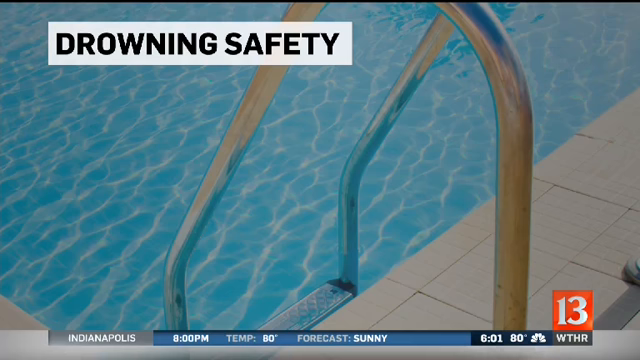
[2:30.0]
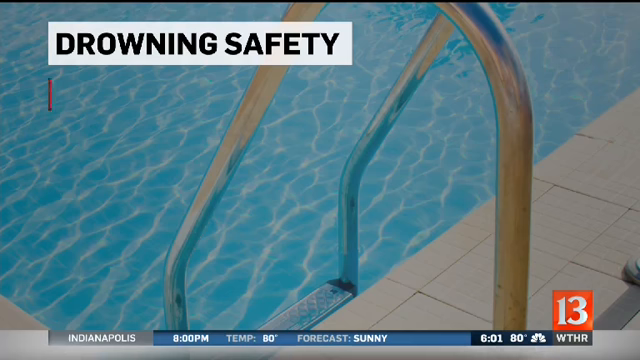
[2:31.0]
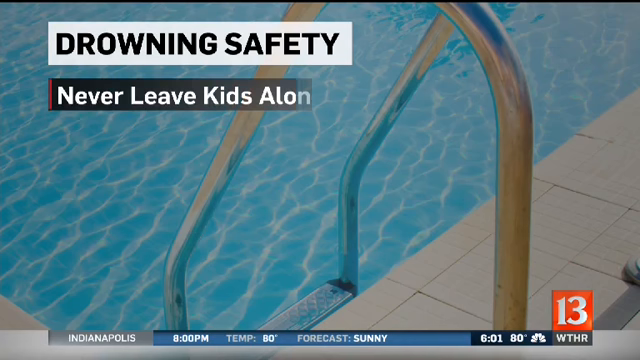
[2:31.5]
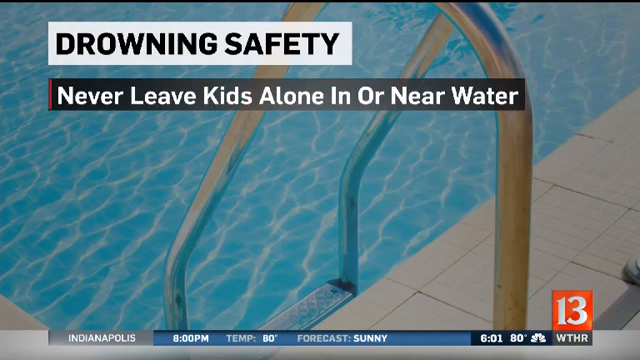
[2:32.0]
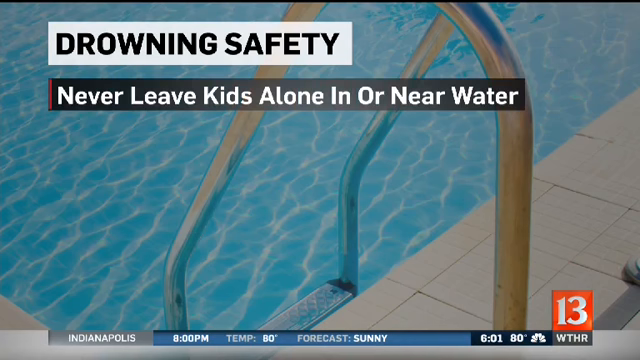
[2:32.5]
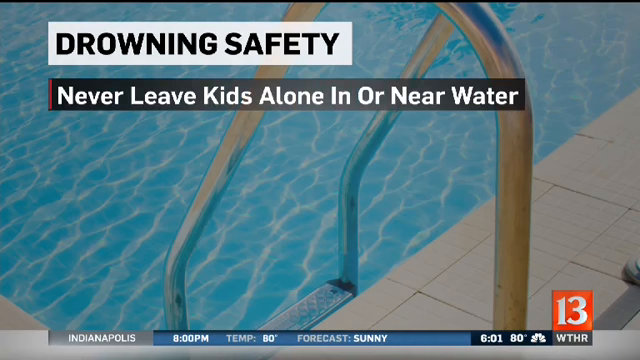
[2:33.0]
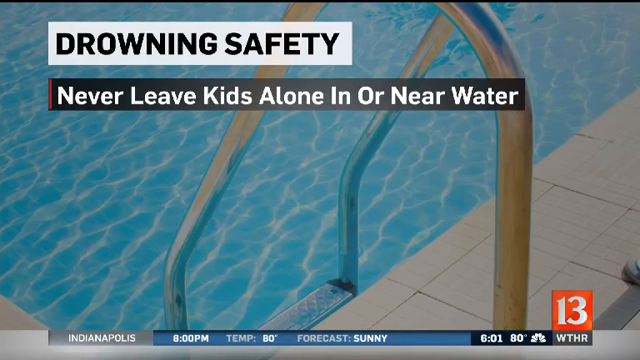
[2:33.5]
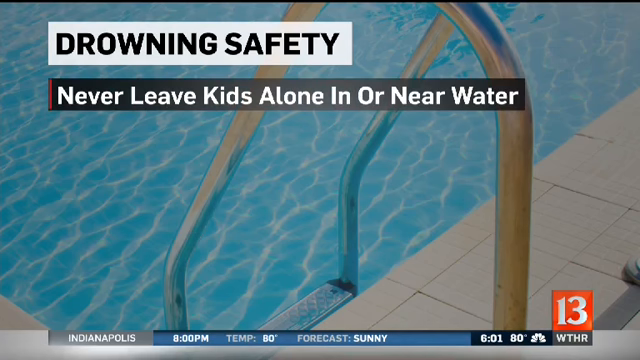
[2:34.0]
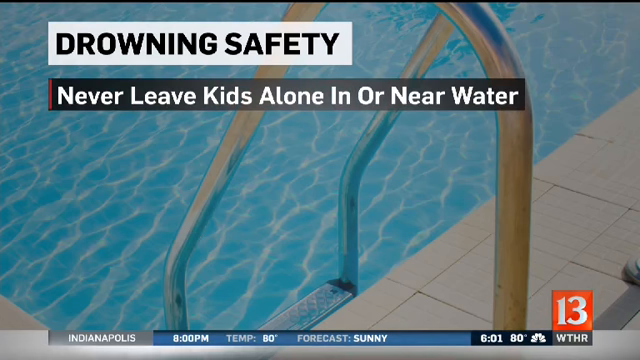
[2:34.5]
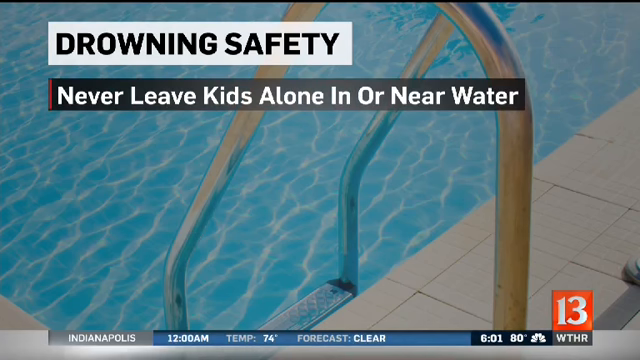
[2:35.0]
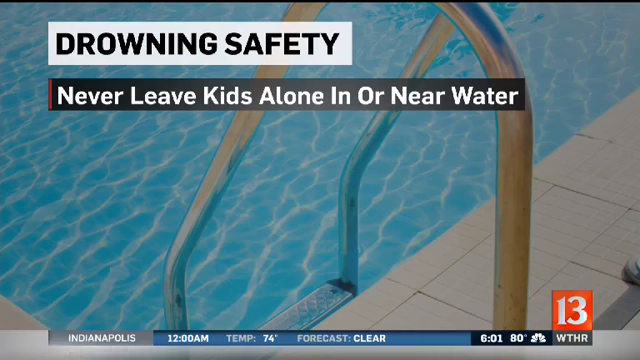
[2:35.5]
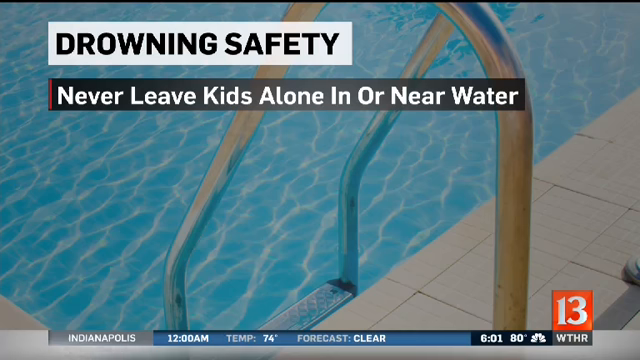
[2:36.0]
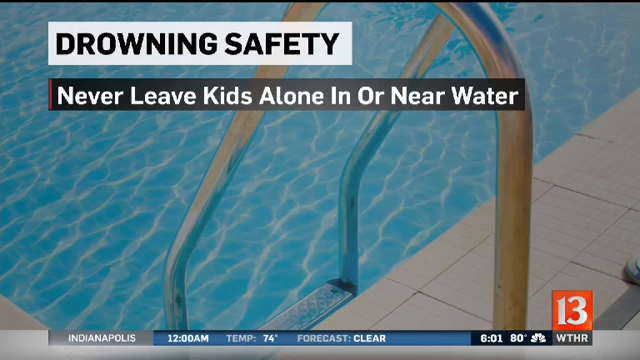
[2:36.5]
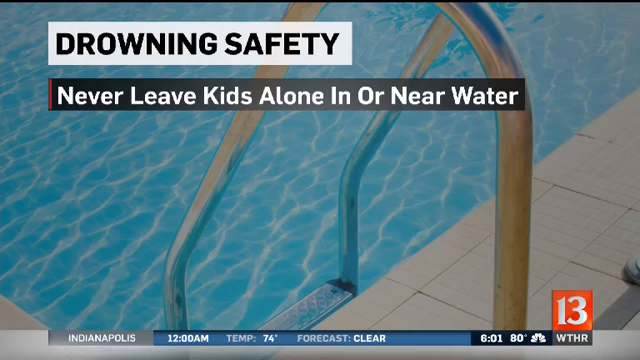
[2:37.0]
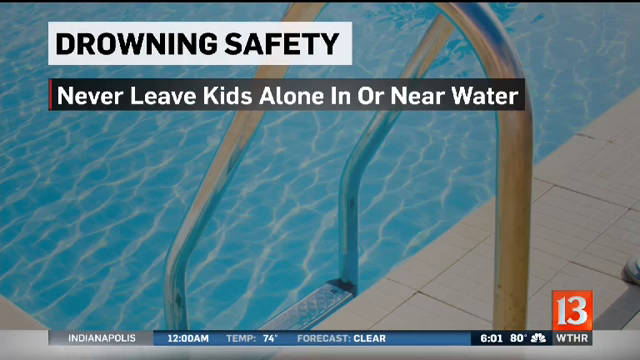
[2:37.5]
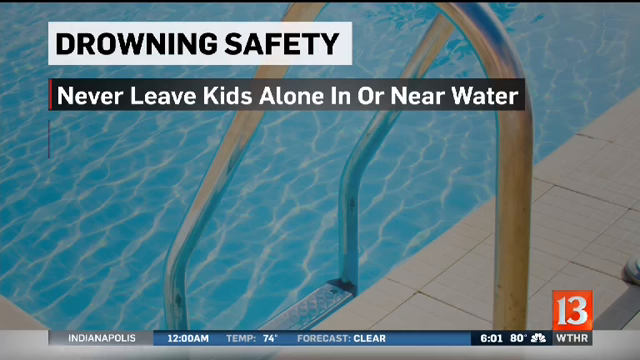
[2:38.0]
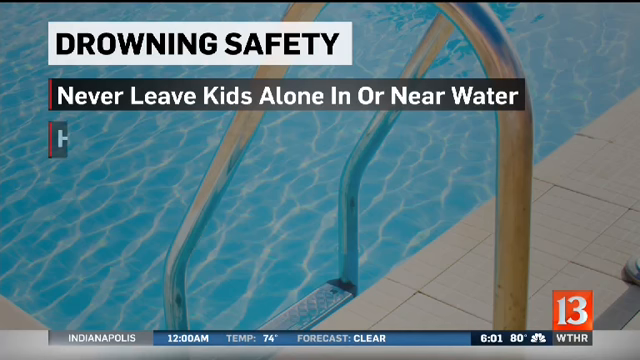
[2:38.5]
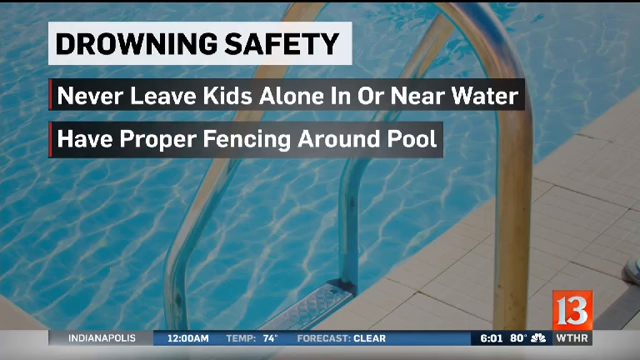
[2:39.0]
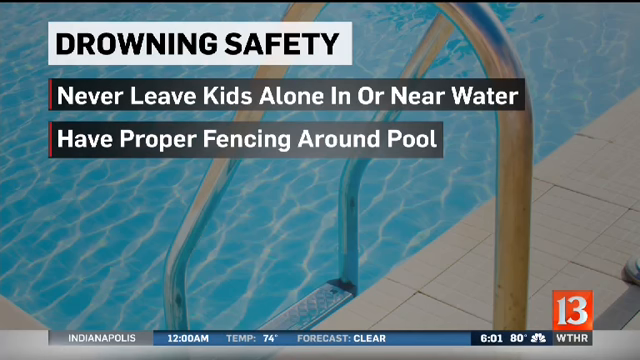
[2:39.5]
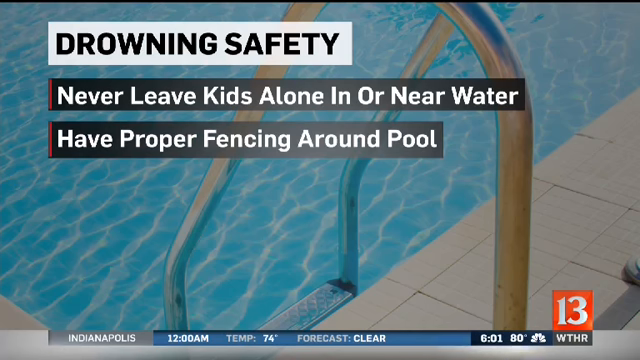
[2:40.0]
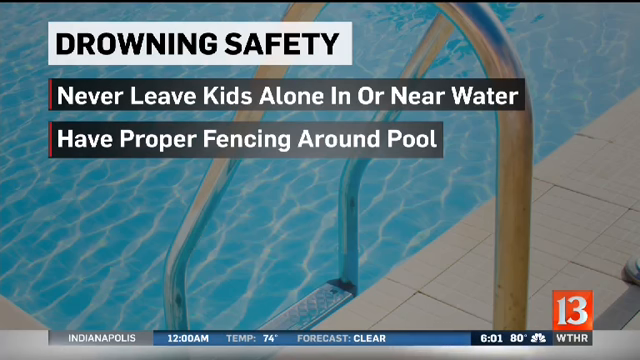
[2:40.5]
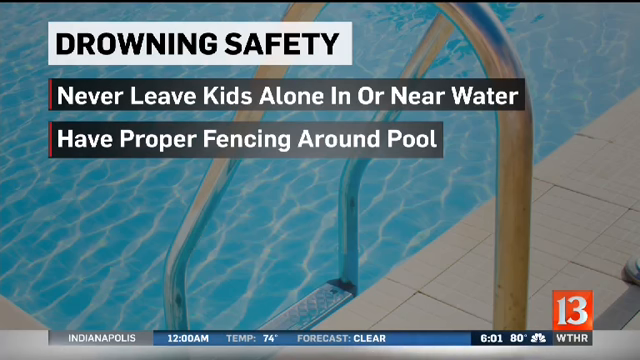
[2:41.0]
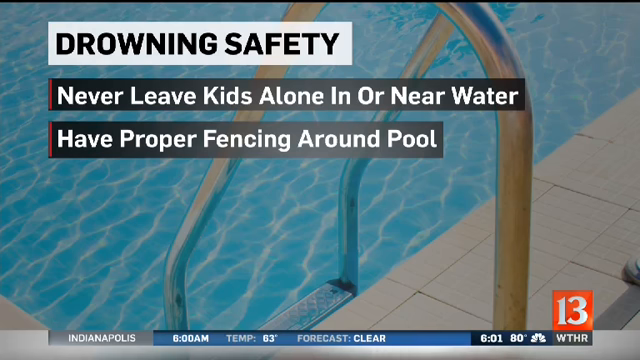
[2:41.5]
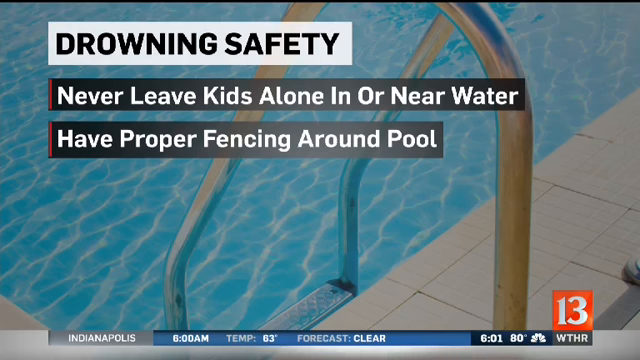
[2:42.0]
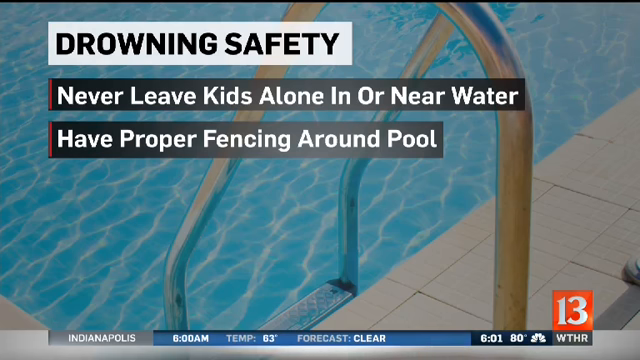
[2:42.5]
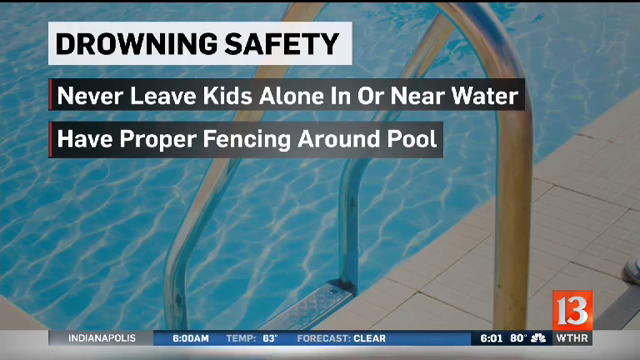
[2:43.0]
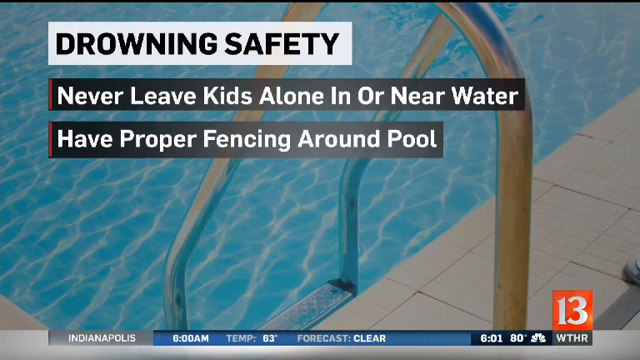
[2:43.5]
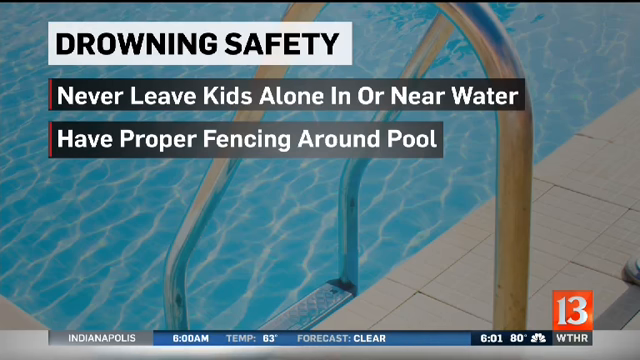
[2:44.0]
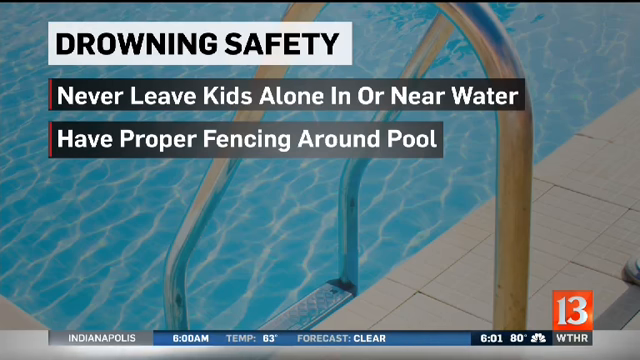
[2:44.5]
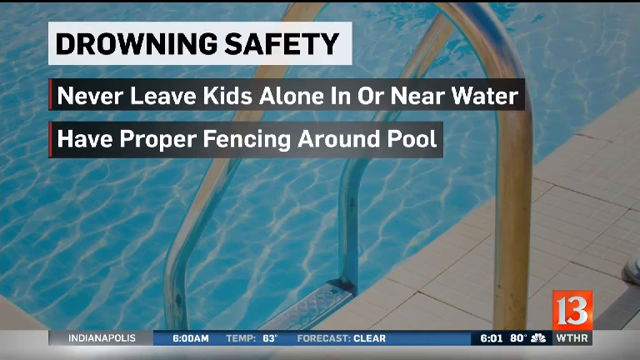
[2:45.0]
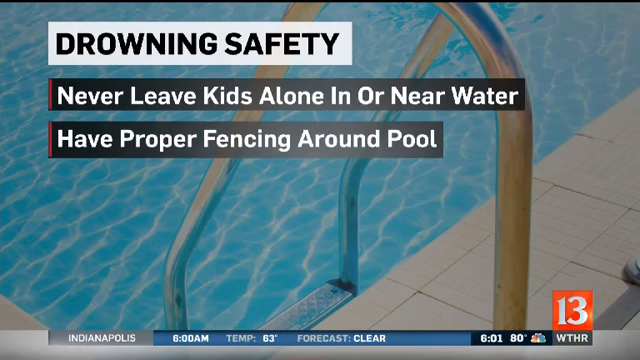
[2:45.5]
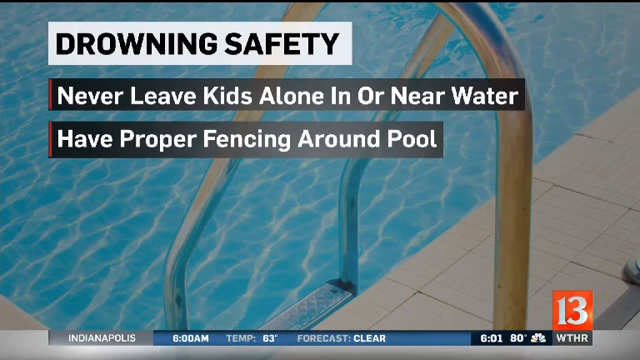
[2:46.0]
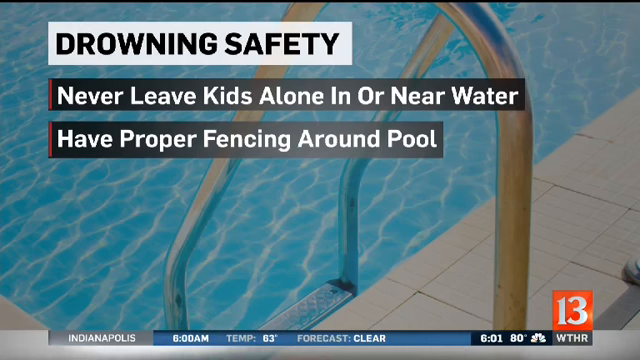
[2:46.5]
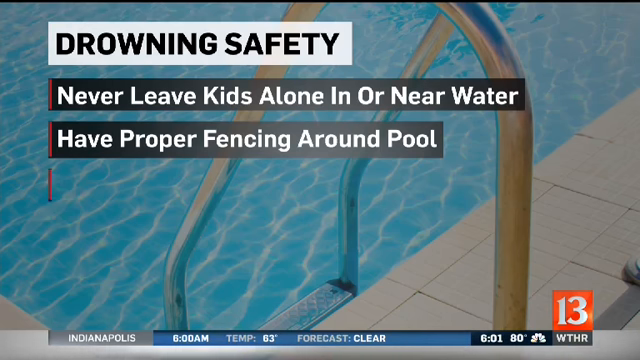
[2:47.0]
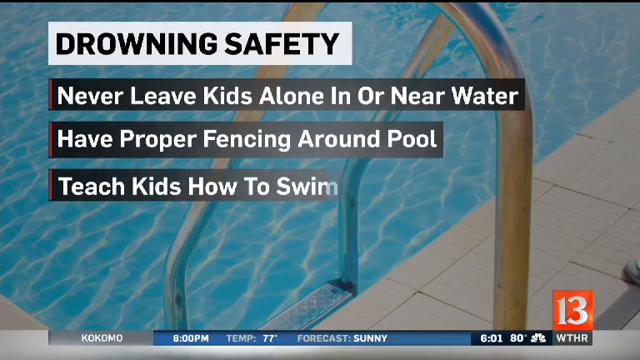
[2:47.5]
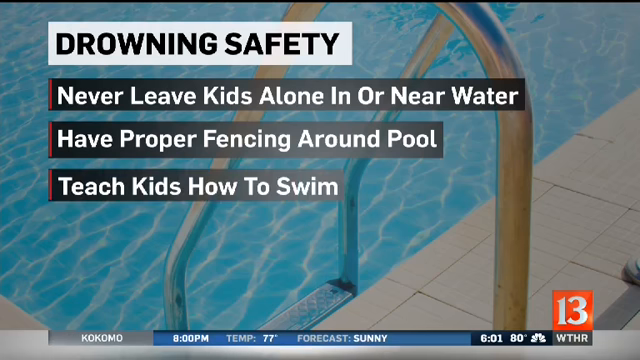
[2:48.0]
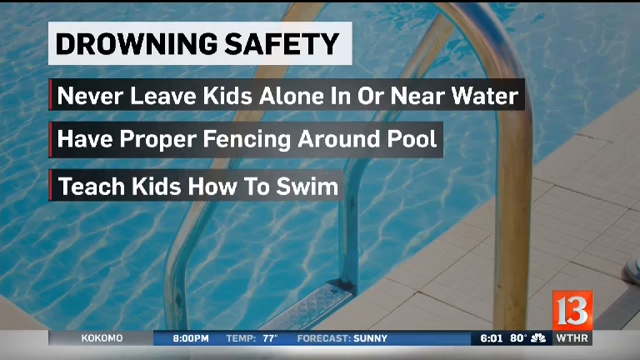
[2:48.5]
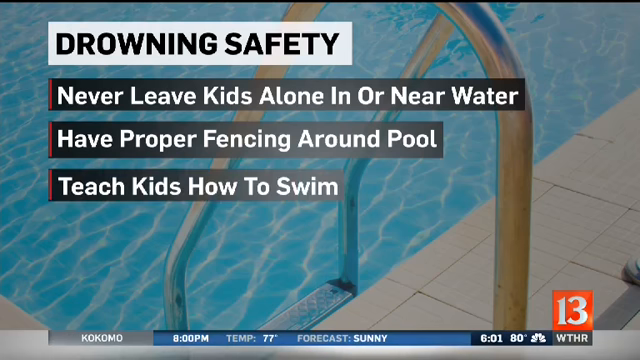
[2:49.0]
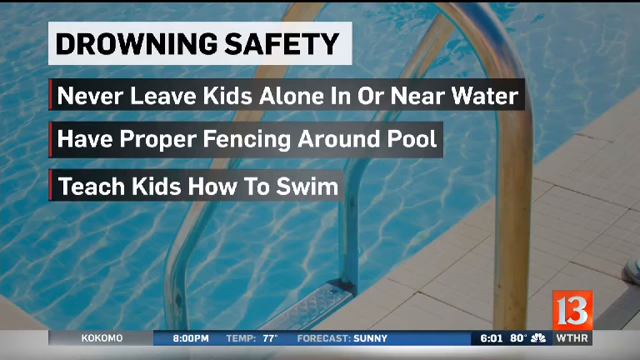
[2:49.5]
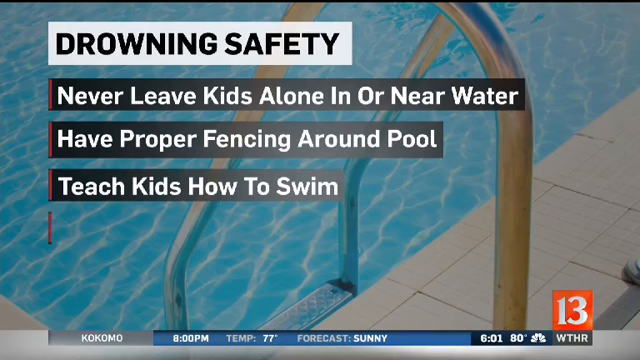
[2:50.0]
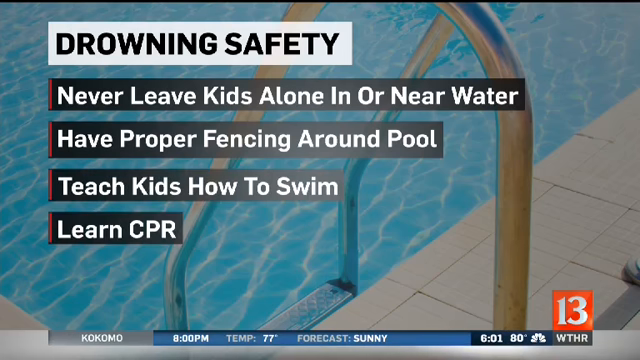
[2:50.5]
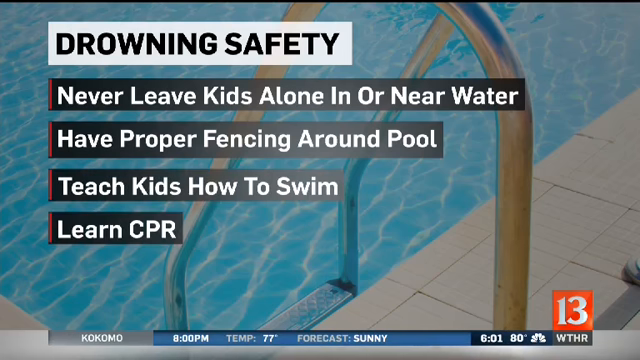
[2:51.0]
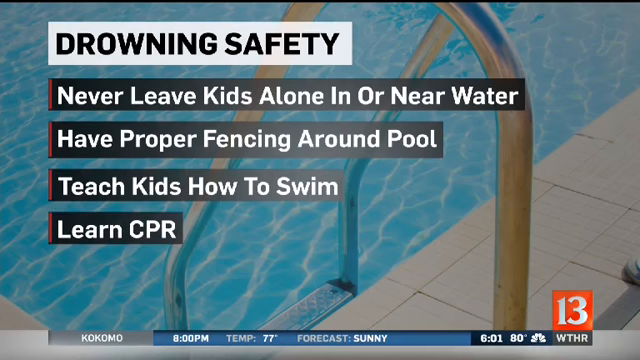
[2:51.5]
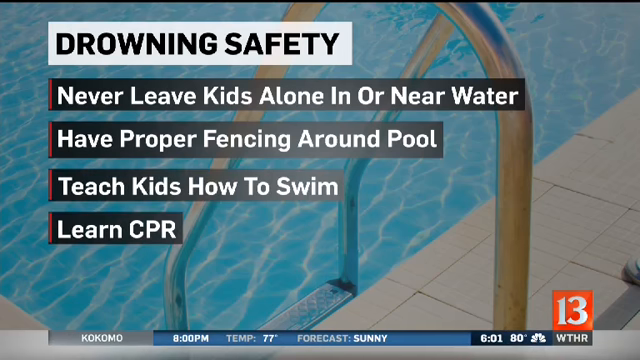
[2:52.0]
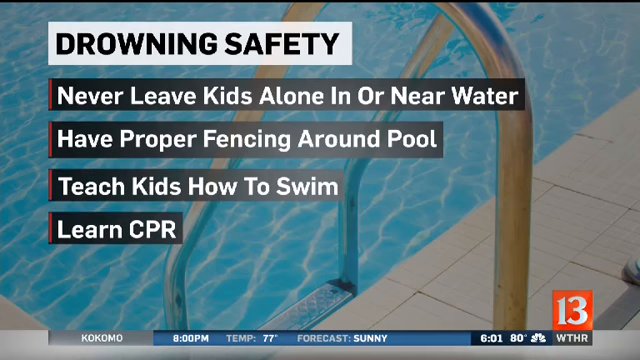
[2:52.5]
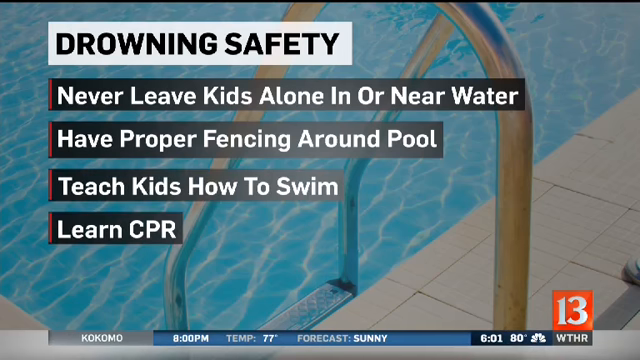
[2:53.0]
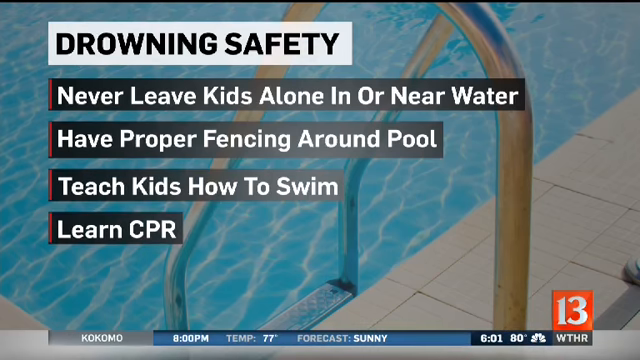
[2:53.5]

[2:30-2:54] A swimming pool appears with "channel 13 news" and the heading "drowning safety." The steps are listed in turn: first "never leave kids alone in or near water," then "have proper fencing around pool," then "teach kids how to swim," and finally "learn CPR."